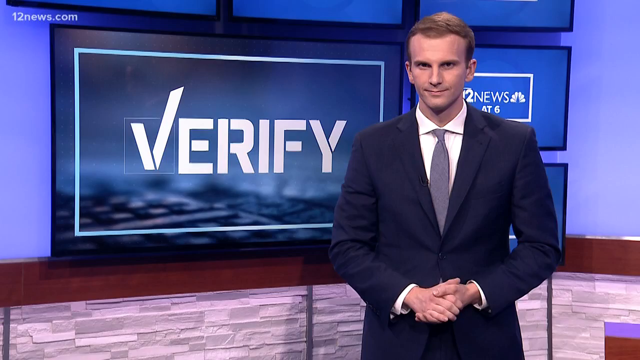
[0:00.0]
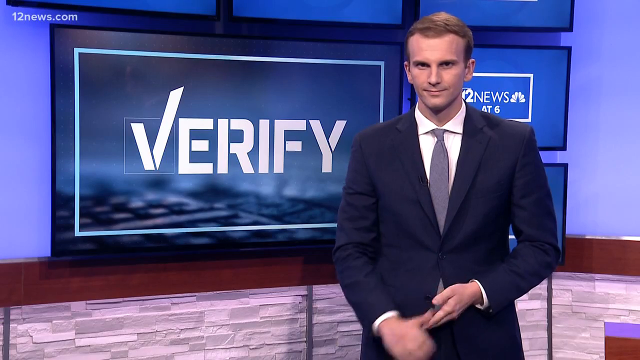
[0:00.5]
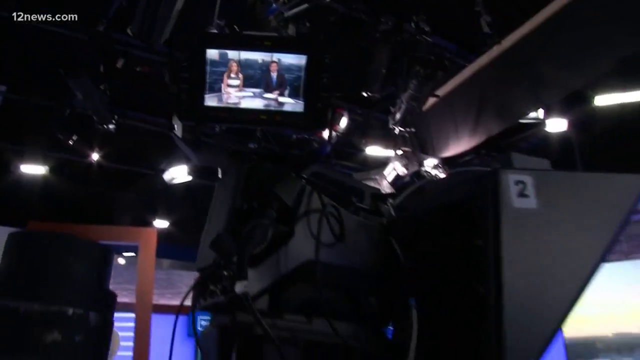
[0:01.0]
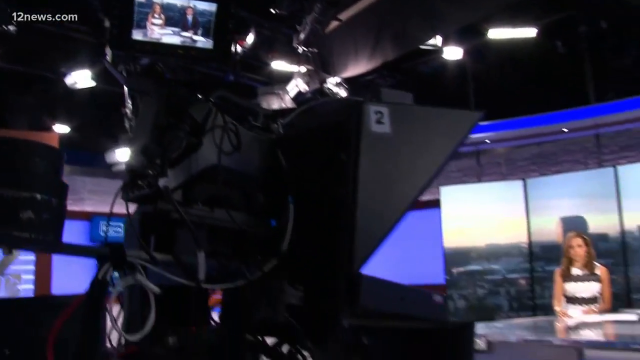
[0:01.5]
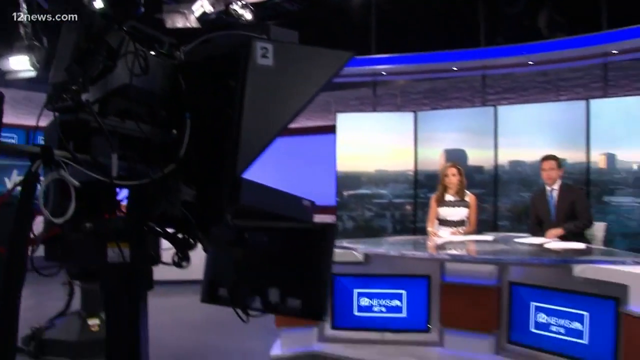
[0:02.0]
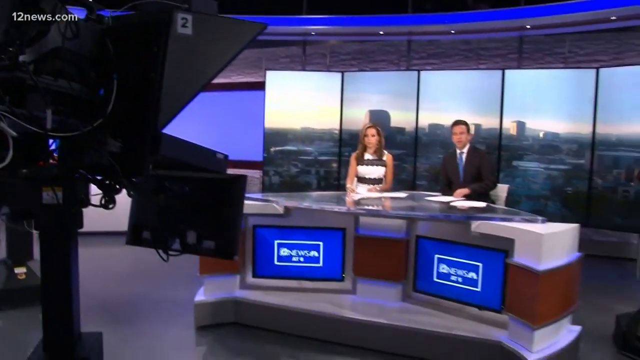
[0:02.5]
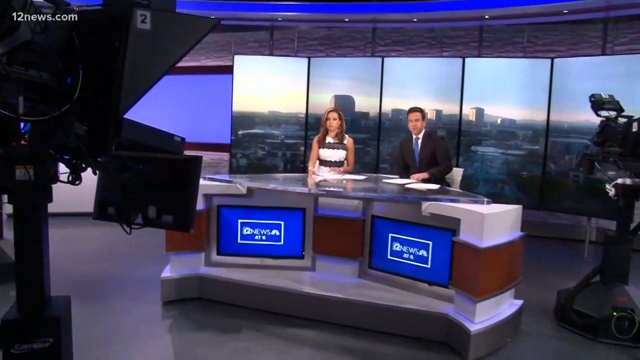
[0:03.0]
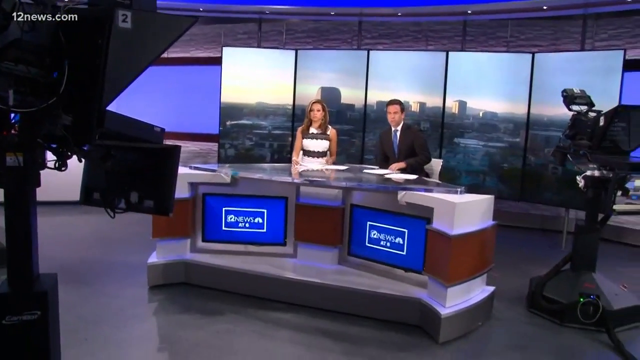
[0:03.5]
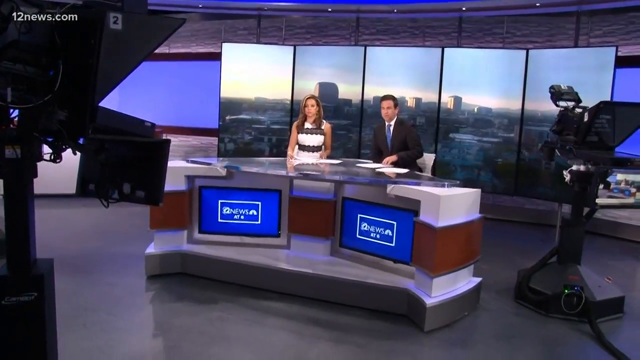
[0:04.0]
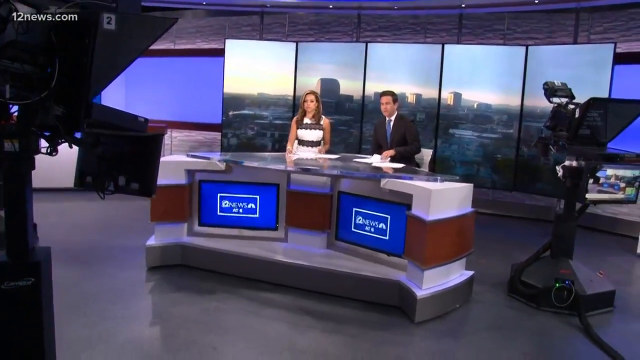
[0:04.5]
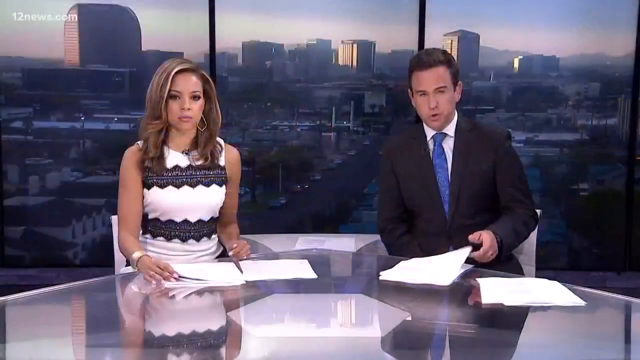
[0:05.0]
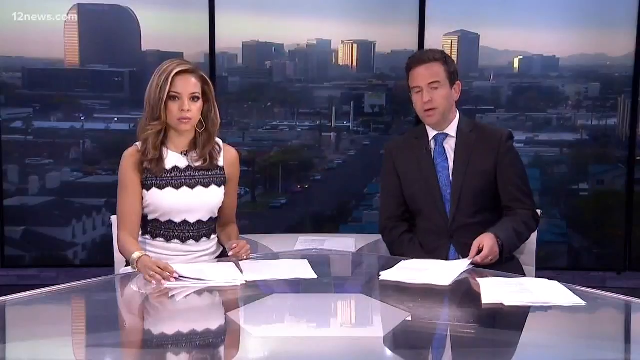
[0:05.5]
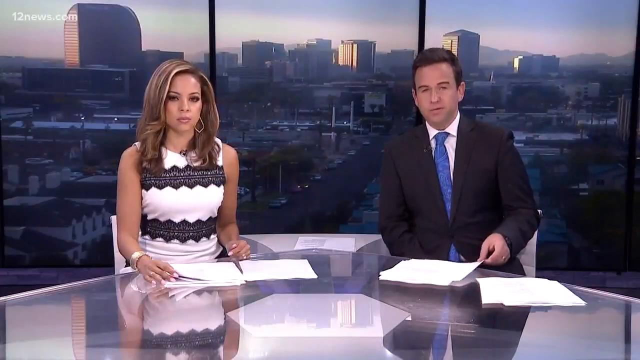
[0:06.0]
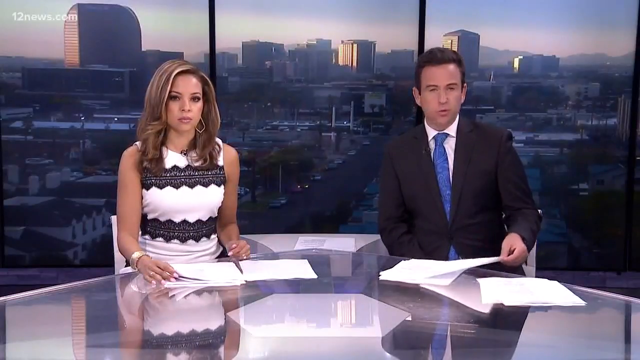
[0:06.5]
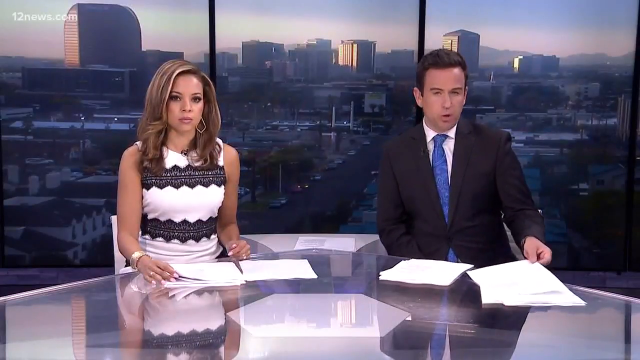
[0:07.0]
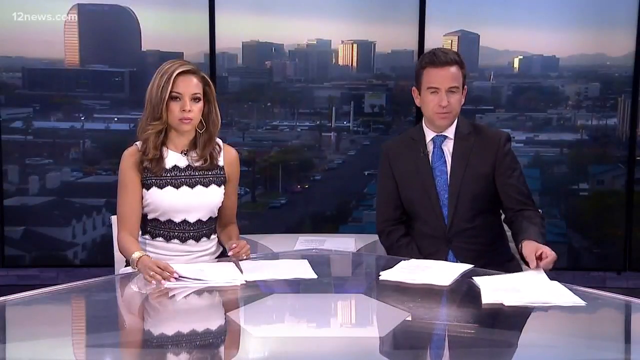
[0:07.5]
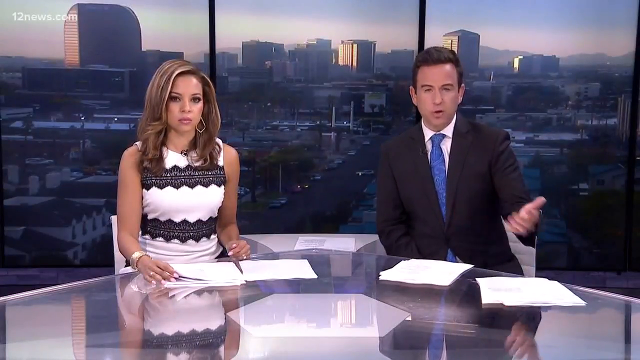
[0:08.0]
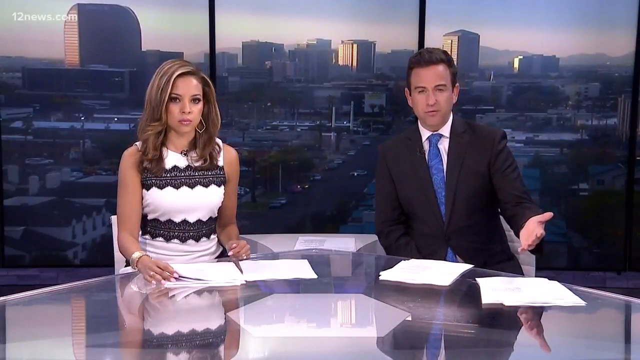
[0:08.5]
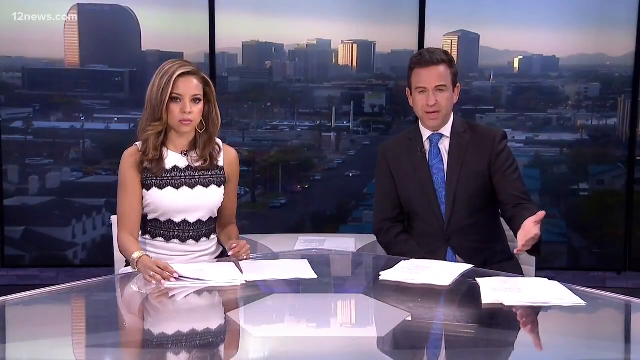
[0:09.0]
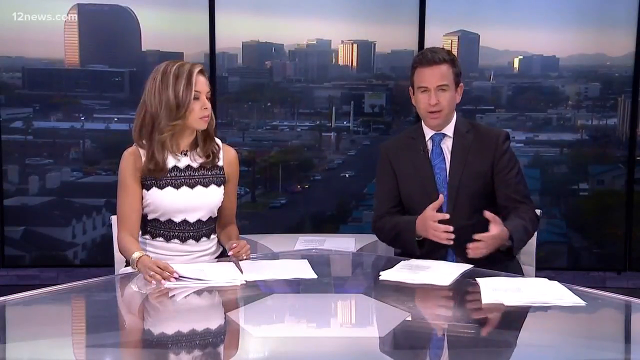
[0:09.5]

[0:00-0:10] The video appears to show the beginning of a news report. A male presenter stands in front of a video screen with the word "Verify" written on it. Next to it, a smaller screen says "12 News at 6" with the NBC logo. The 12news.com logo appears in the upper left corner of the screen. The scene then switches to two presenters sitting at a desk in the studio. The presenter on the left is a woman wearing a white sleeveless dress with rows of black lace across the top and near her waist. The male presenter on the right wears a dark jacket with a blue tie. Behind them, a video of a small town skyline is projected on three separate video screens. The male presenter speaks to the camera. There are papers on the desk in front of both of them.